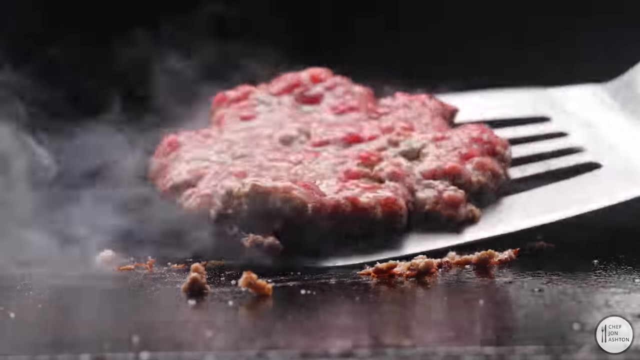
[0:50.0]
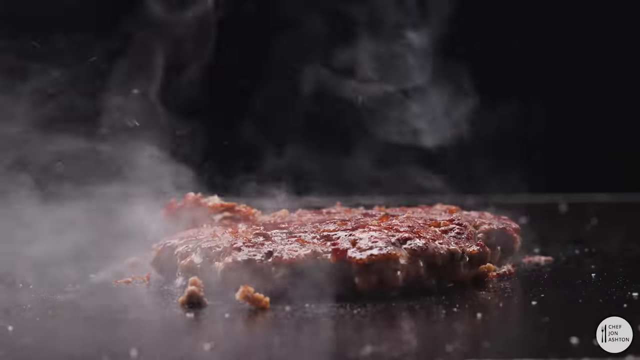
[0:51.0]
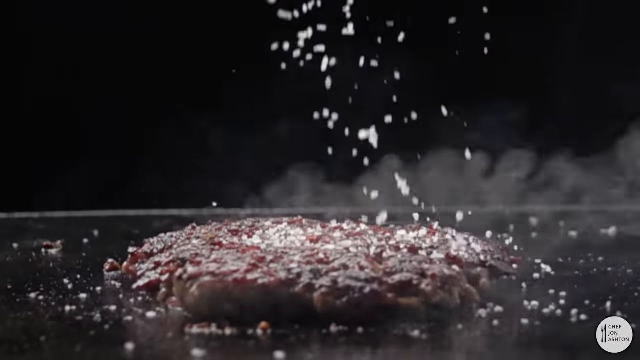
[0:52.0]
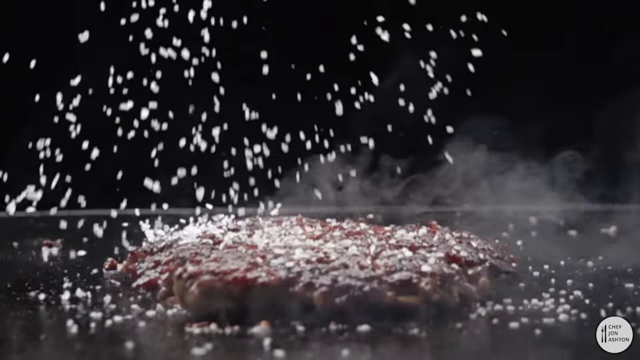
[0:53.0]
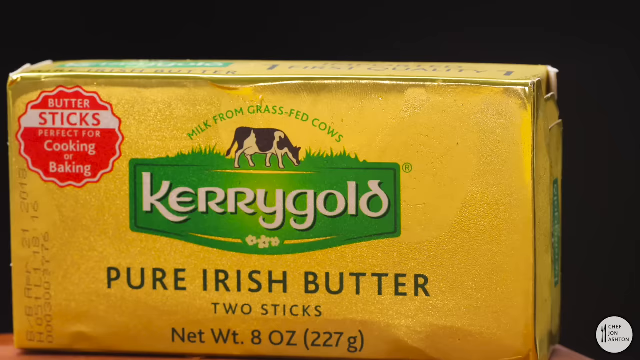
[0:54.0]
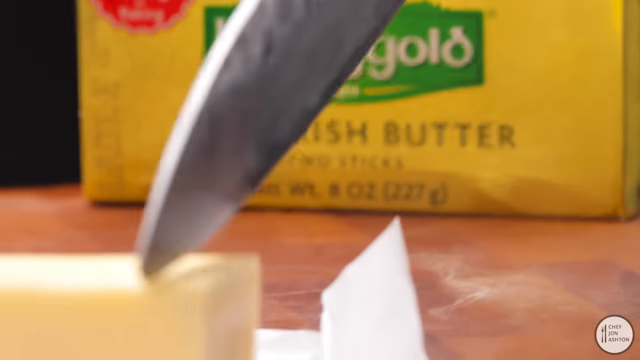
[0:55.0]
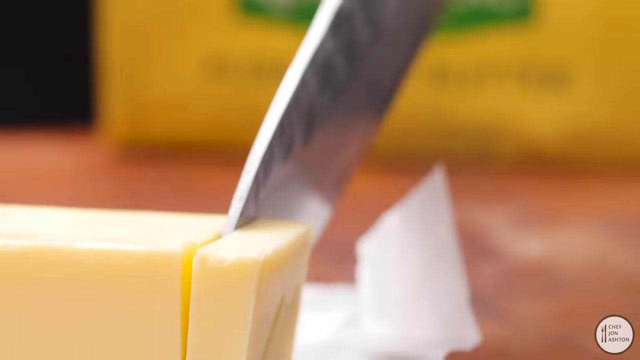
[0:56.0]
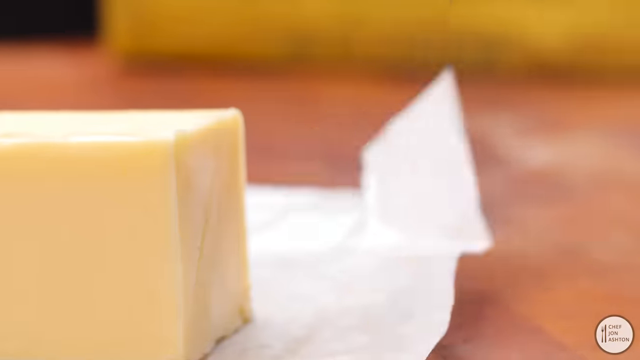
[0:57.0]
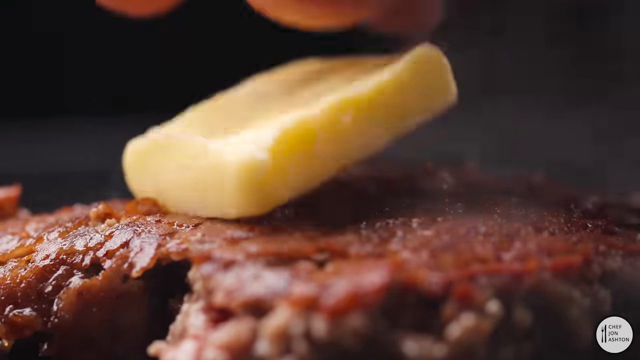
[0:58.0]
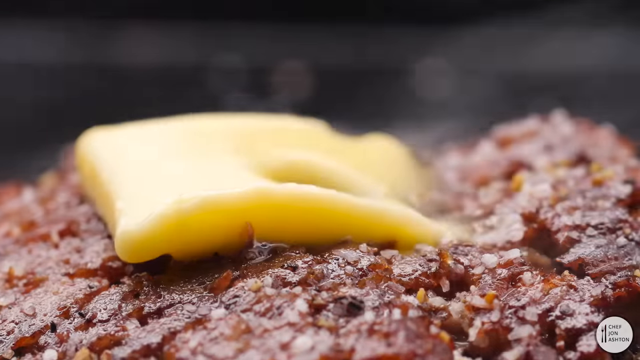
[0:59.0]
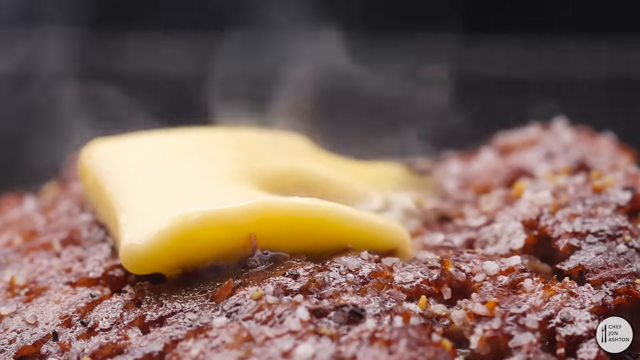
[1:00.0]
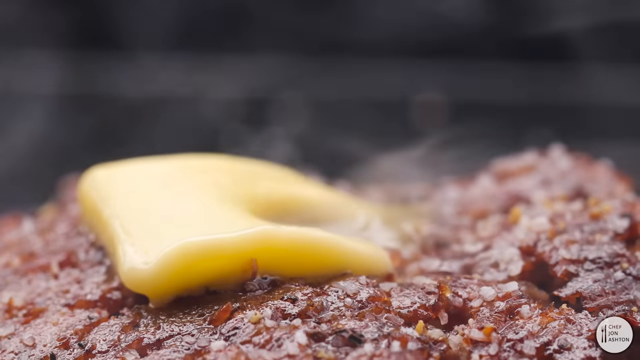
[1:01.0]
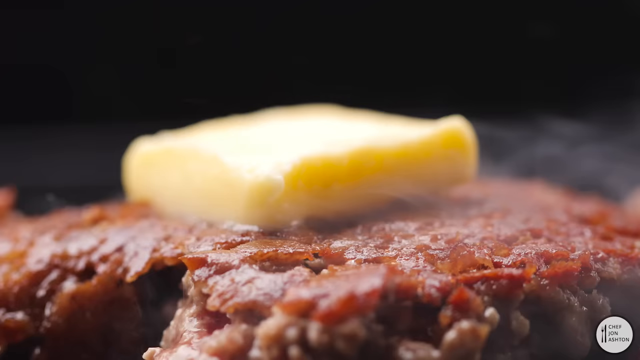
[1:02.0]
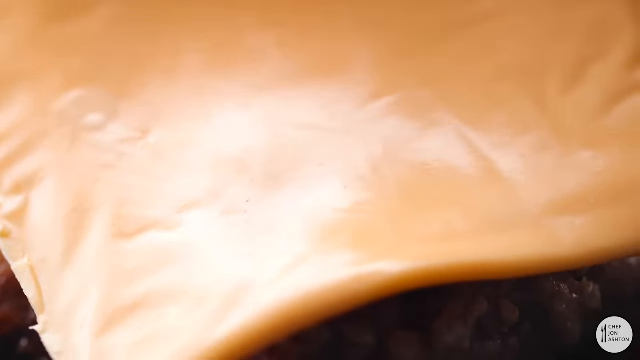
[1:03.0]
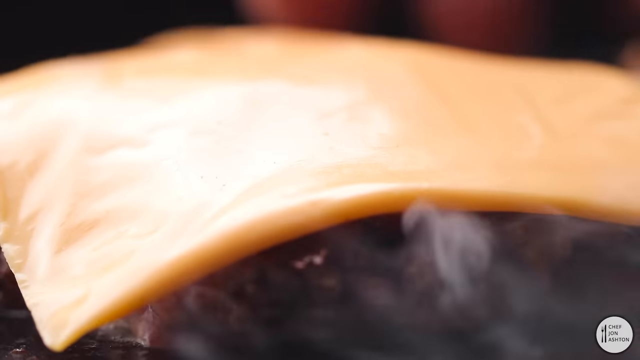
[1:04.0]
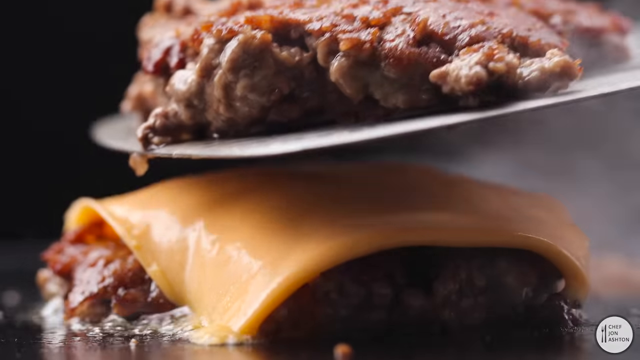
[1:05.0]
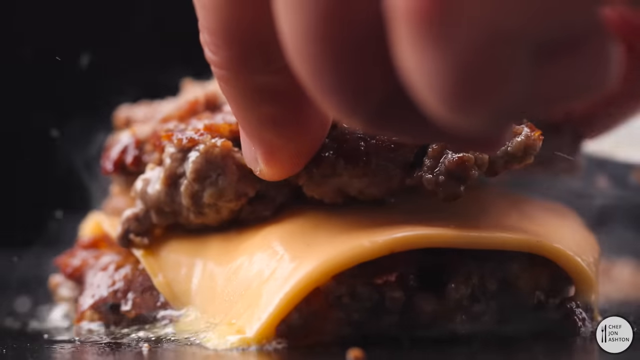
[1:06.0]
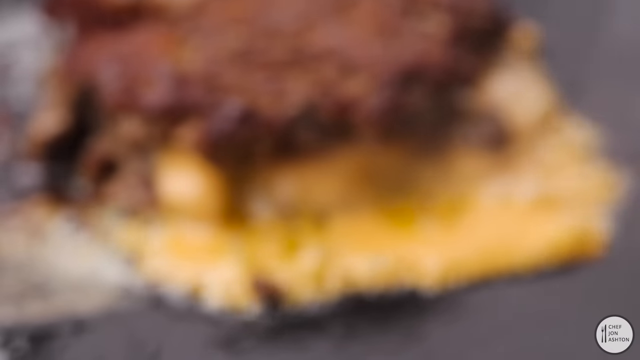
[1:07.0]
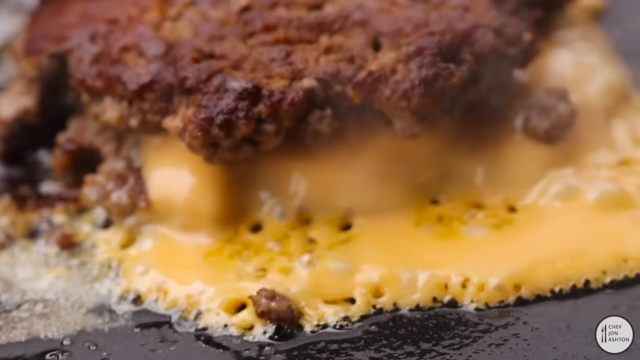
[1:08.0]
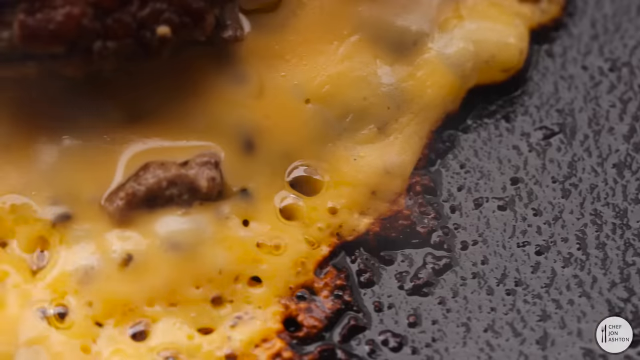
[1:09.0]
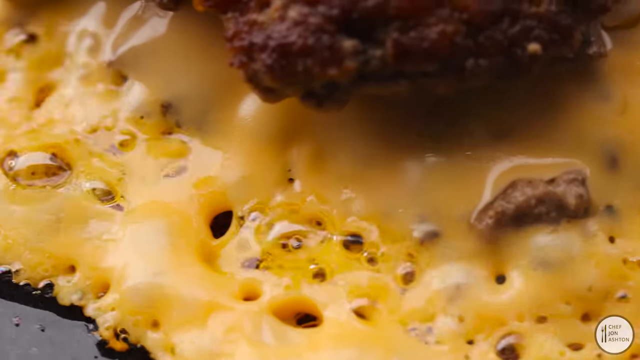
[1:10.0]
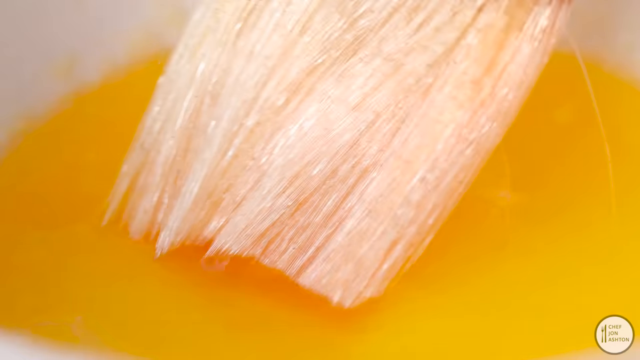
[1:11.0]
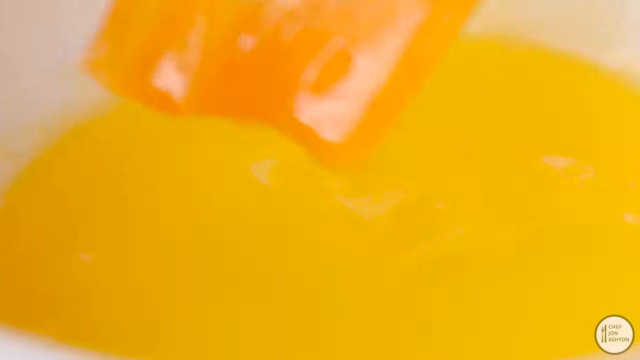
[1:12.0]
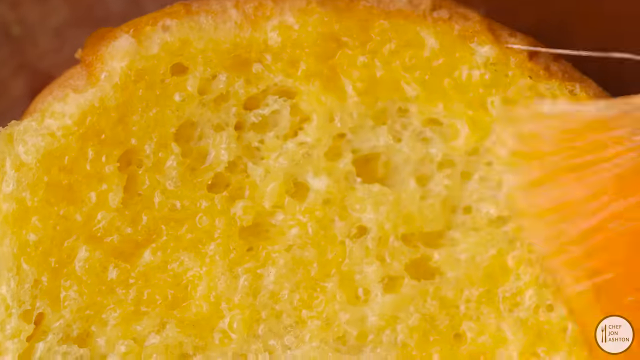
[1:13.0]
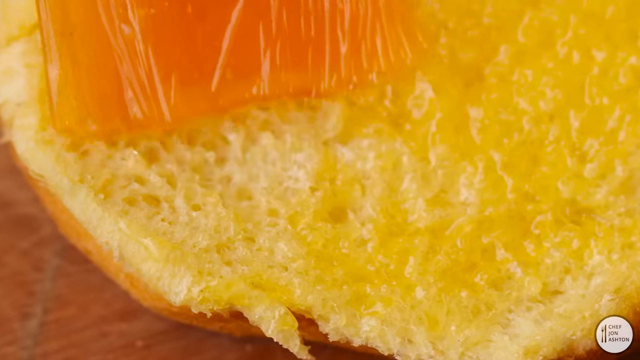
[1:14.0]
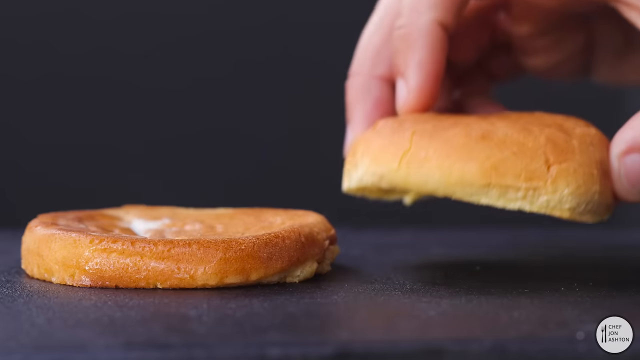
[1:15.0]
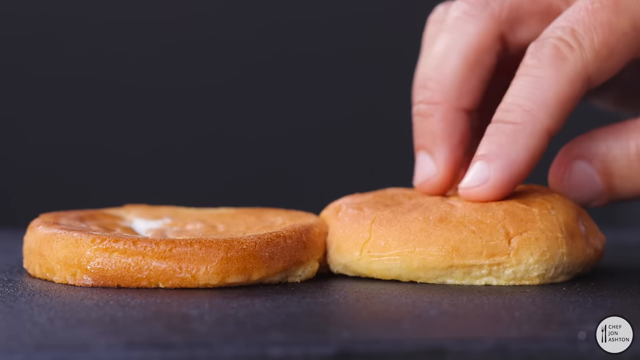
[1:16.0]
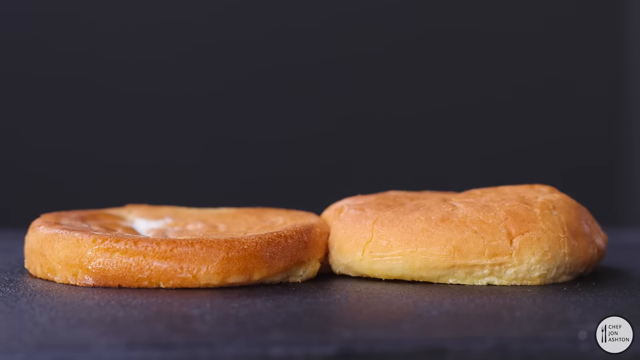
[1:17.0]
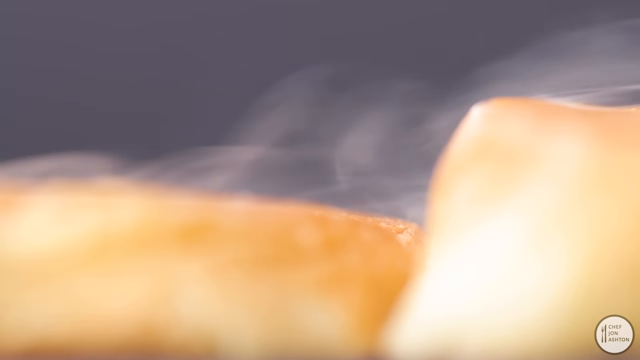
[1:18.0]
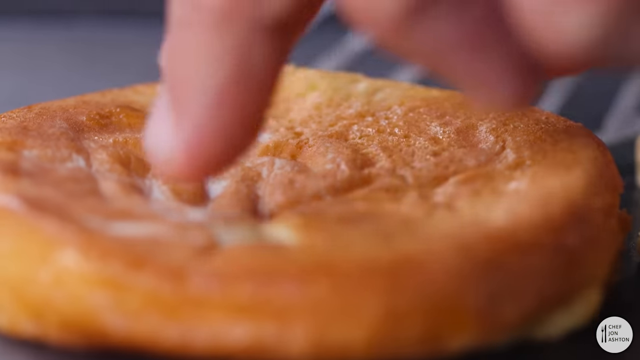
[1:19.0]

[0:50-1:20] A hamburger patty is on a spatula that looks like it is made of silver metal. Beneath the spatula is a skillet or grill with a few little chunks of meat left behind. The patty is turned over onto its less cooked side, and what appears to be salt is sprinkled onto it. The video then shows what looks like a block of butter. At the top left of the package it says "butter sticks perfect for cooking or baking," along with "Milk from grass-fed cows," "Kerrygold," "Pure Irish butter" and "Two sticks." The package is gold with red, green, white and black illustrations and text. A knife cuts a slice off a stick of butter, and the butter is set on top of the hamburger patty, where it melts into the patty. A slice of cheese is laid on the patty, and then another hamburger patty is laid on top of the patty and cheese, with the cheese melting between the two patties. It sizzles and bubbles on the skillet or grill.